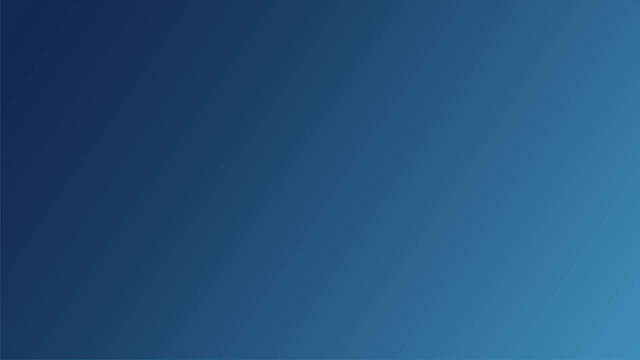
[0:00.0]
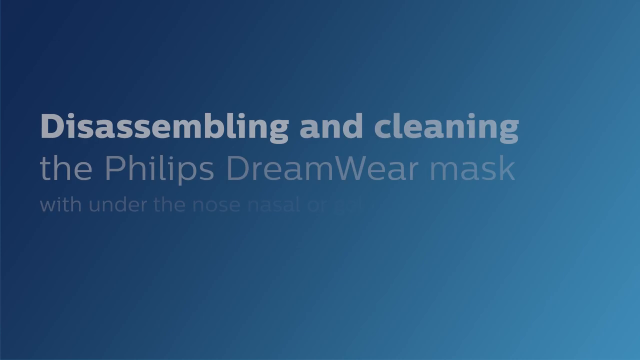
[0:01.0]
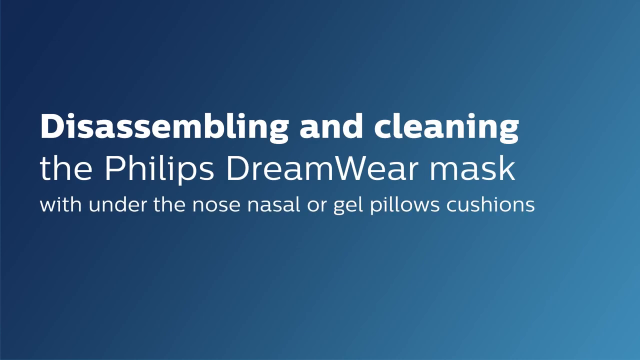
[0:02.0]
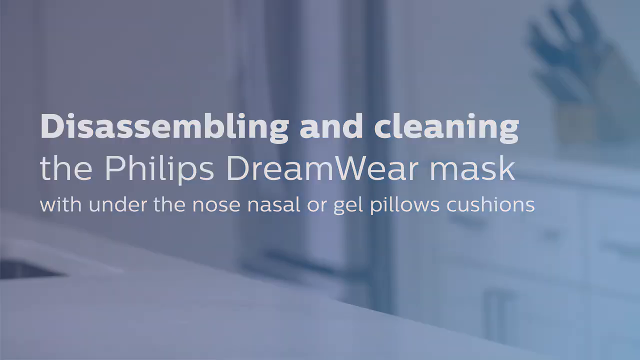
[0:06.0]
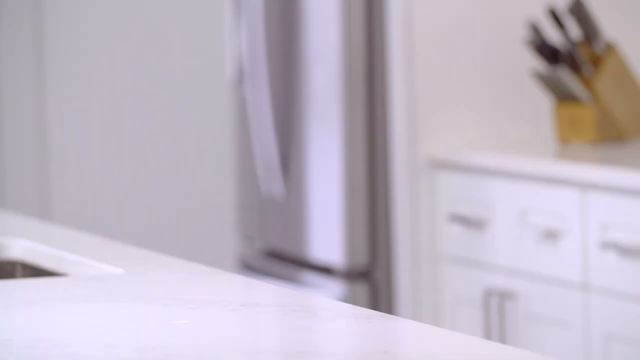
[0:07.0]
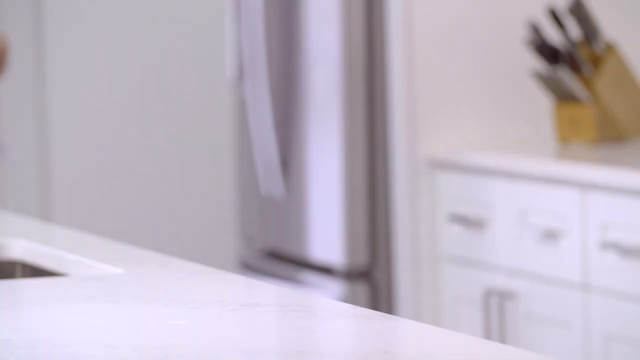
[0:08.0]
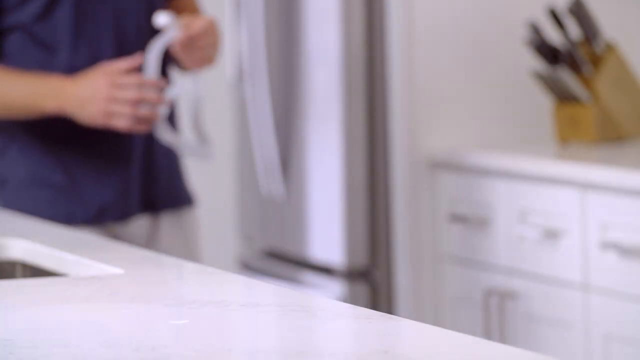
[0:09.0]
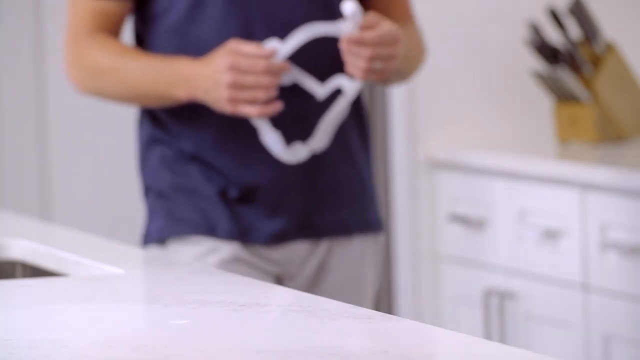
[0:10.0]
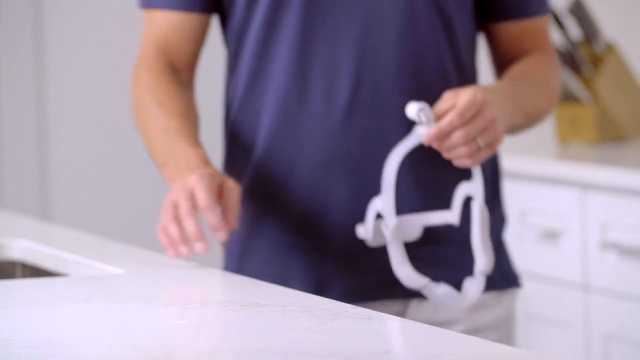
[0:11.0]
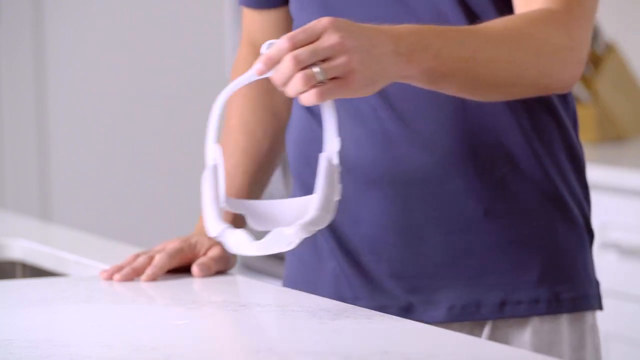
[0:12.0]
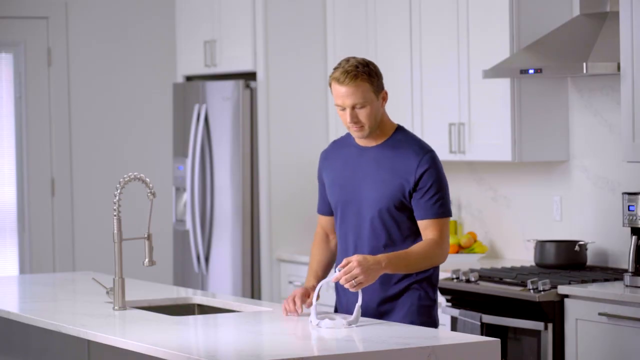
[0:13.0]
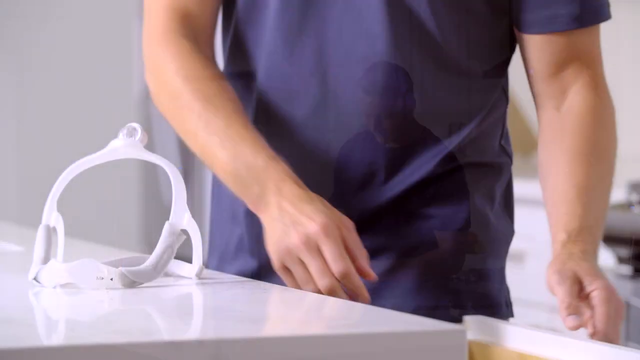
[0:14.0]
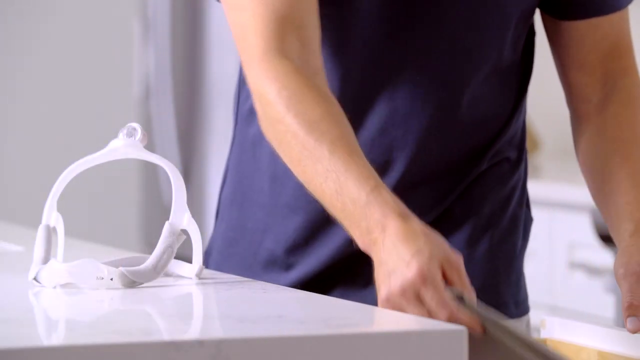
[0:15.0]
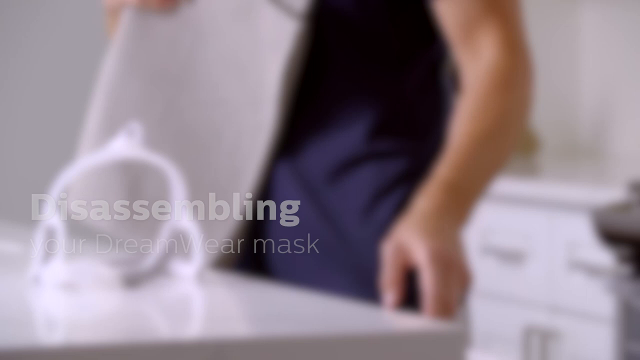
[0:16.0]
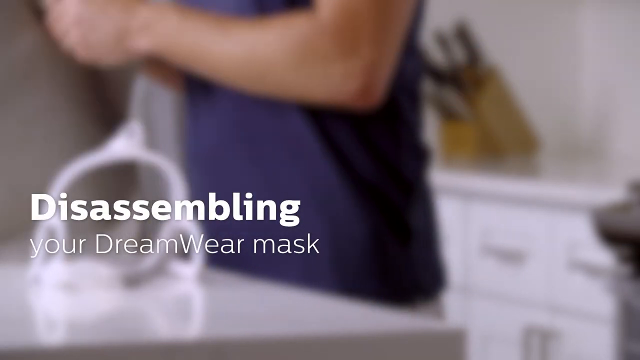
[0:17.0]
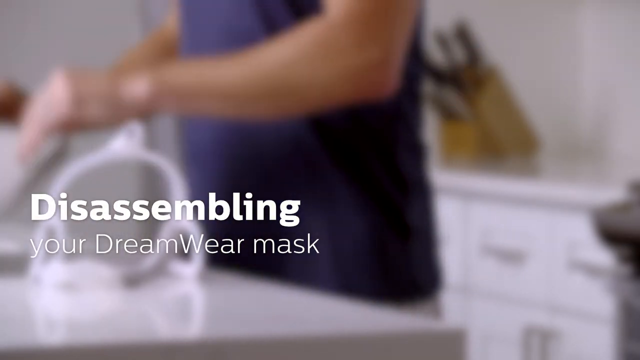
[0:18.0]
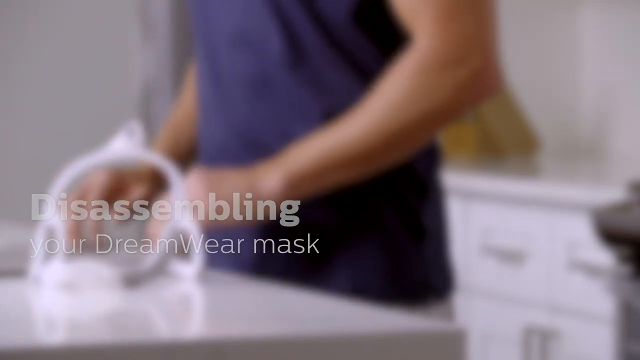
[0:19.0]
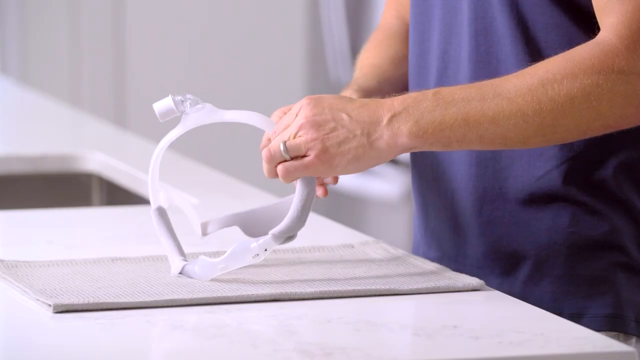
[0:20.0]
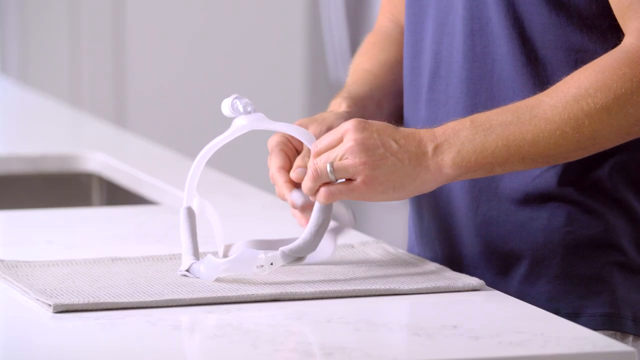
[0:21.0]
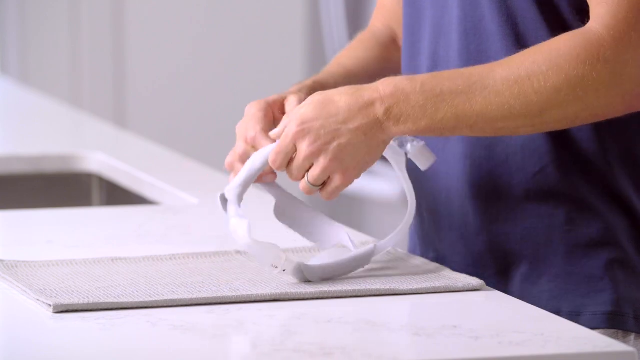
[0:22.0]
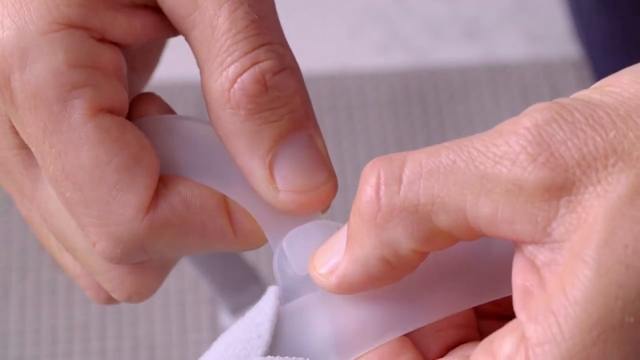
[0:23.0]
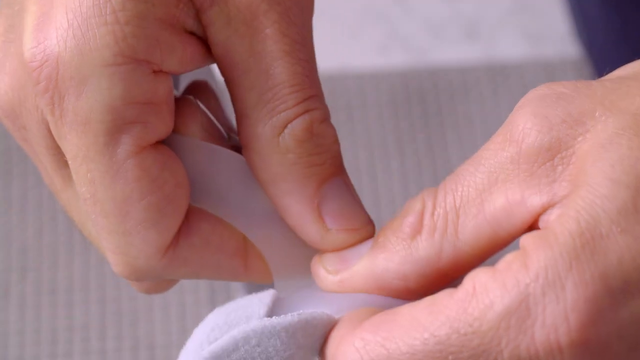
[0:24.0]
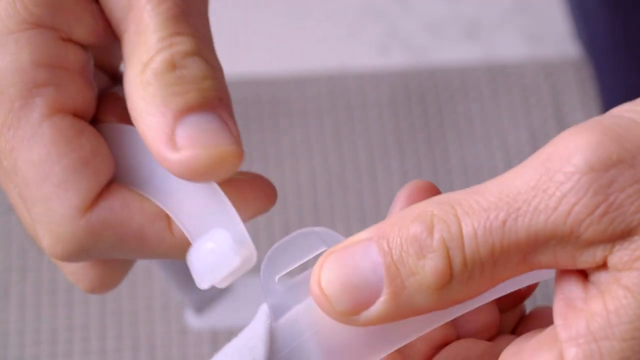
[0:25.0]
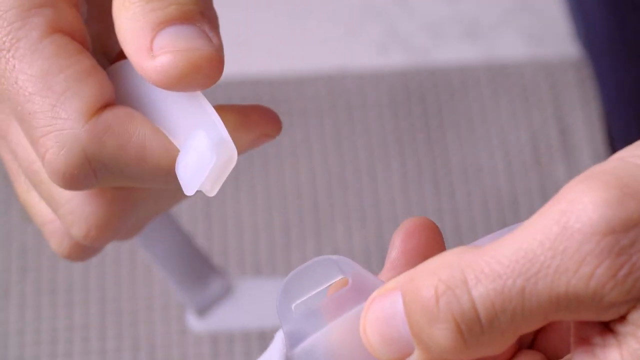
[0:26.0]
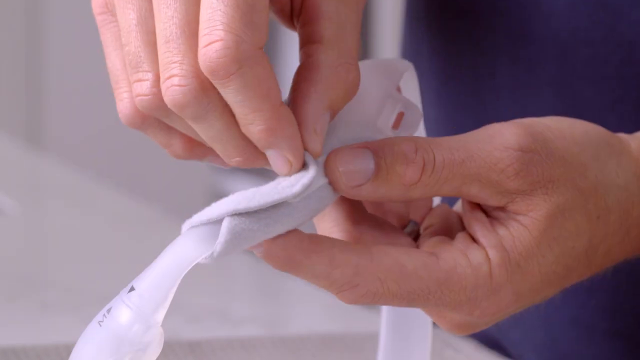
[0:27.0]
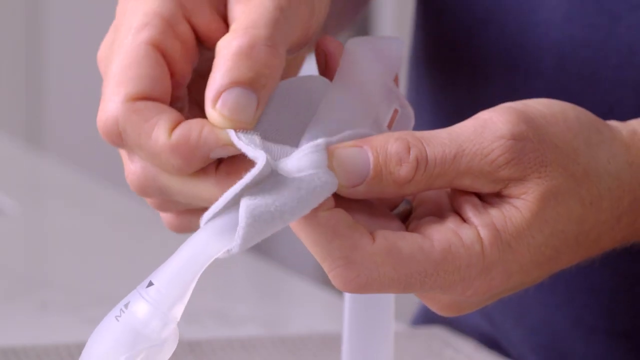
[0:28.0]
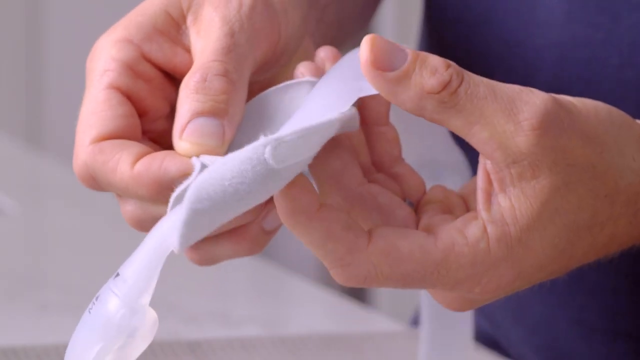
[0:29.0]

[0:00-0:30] The video opens with English text on a blue gradient screen, lighter on the far right and darker toward the left. The text reads "disassembling and cleaning the Philips Dreamwear mask with under the nose, nasal, or gel pillow cushions". Next, what looks to be someone in a purple shirt walks up to a kitchen counter holding something, apparently the mask, in his hands, and places it on the cabinet to his left. The man is shown for a couple of seconds; he has short, sort of golden brown hair that looks very straight. Text then appears at the bottom left reading "disassembling your Dreamwear mask". He clicks some sort of button on the mask to unlatch it and tears off a certain part of it.